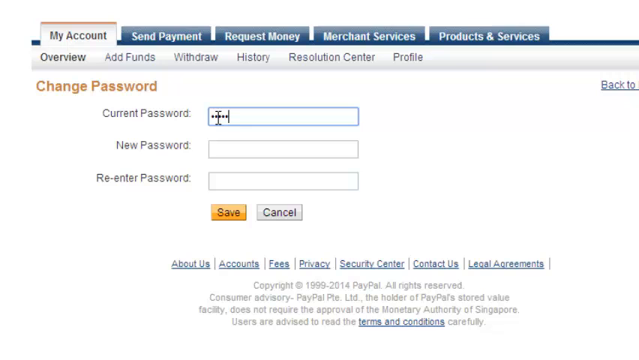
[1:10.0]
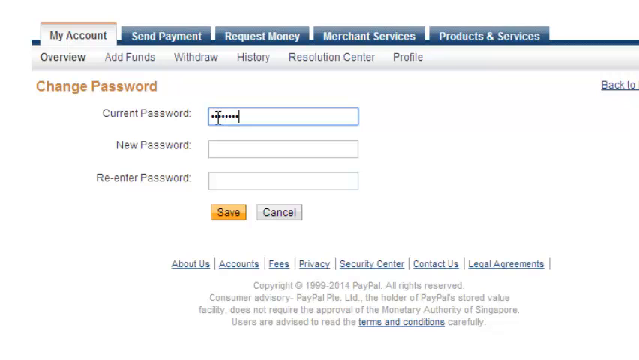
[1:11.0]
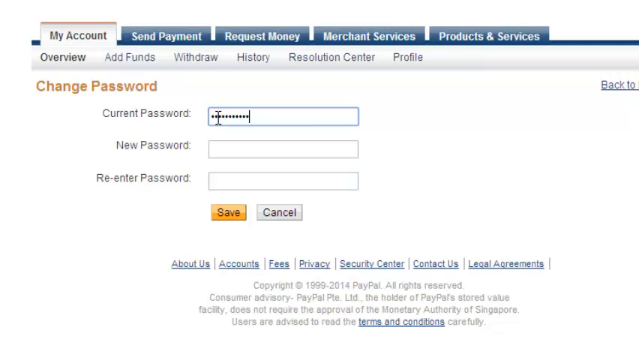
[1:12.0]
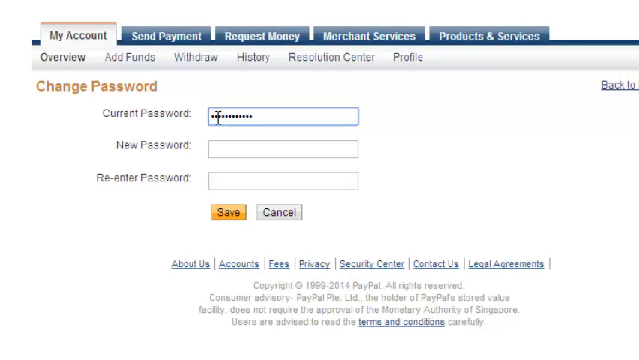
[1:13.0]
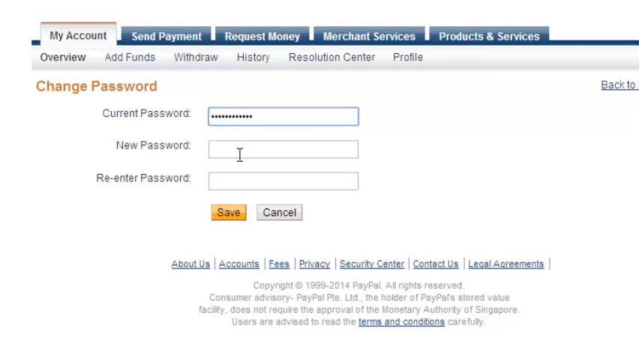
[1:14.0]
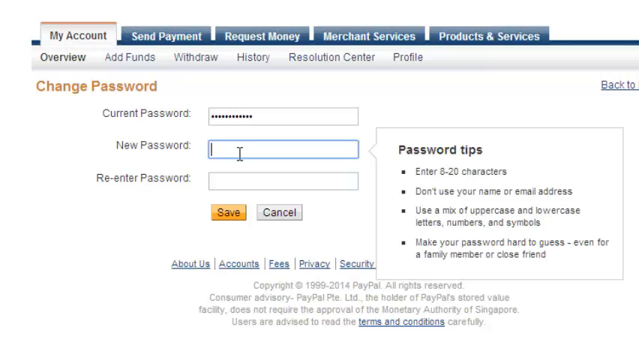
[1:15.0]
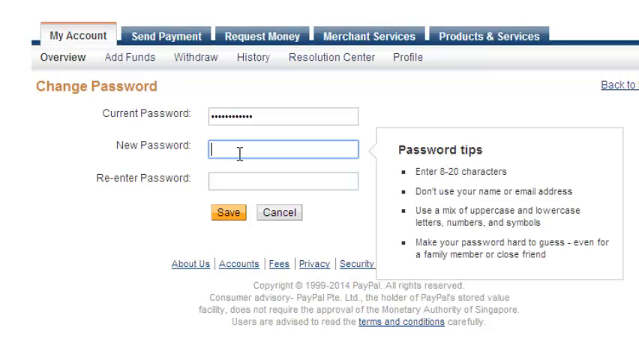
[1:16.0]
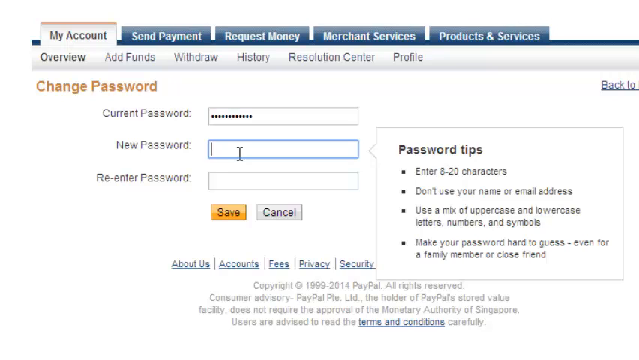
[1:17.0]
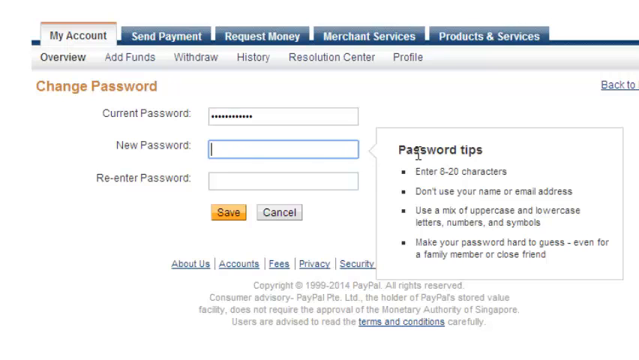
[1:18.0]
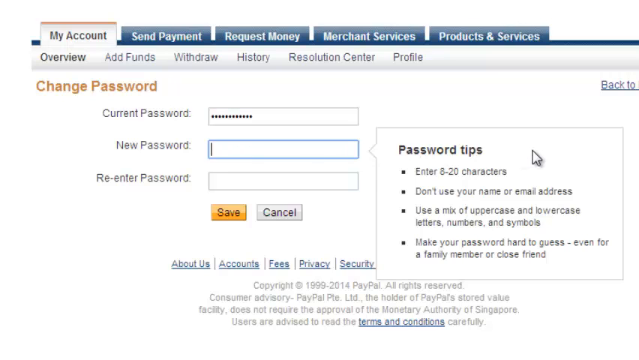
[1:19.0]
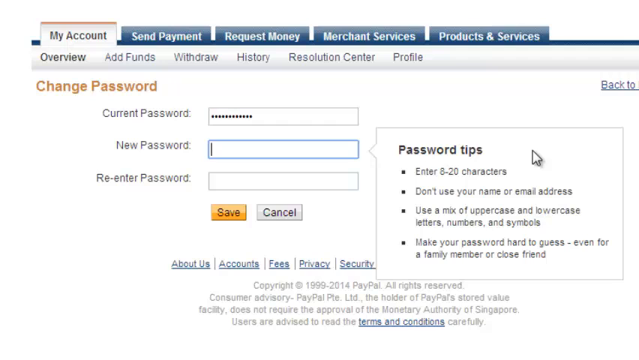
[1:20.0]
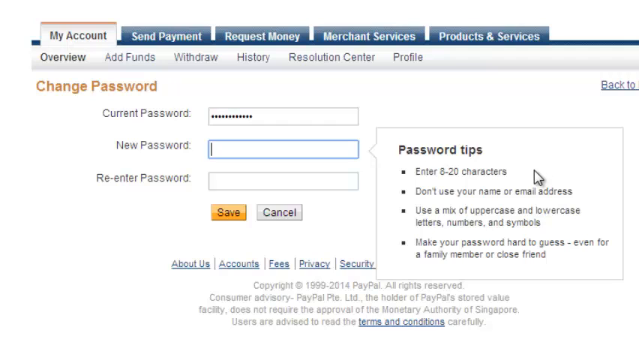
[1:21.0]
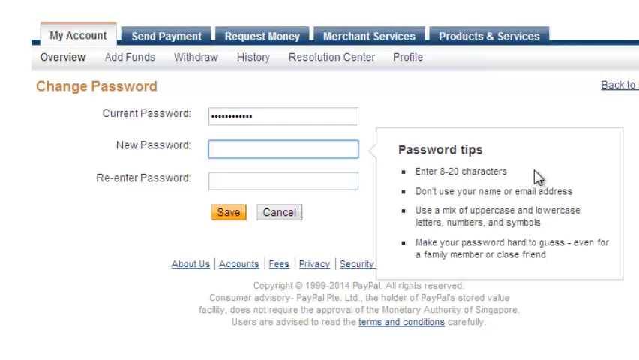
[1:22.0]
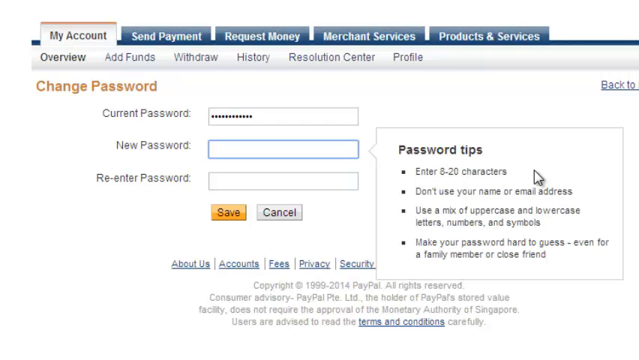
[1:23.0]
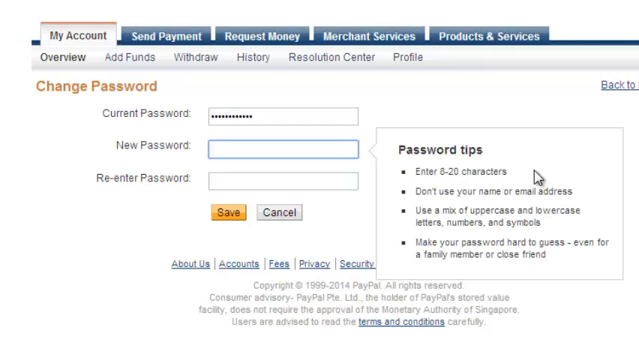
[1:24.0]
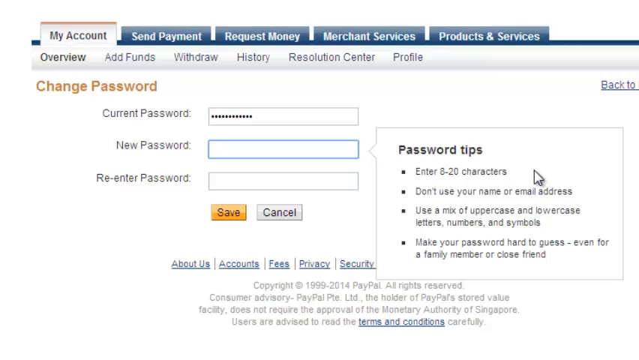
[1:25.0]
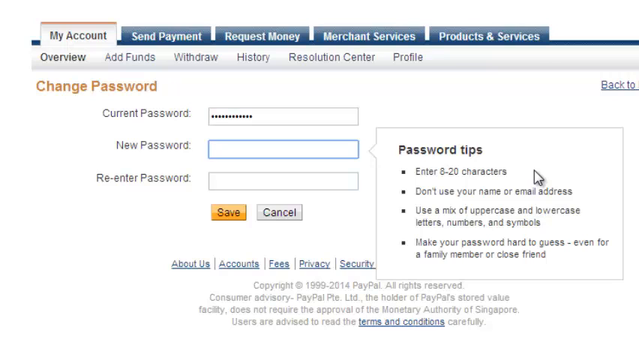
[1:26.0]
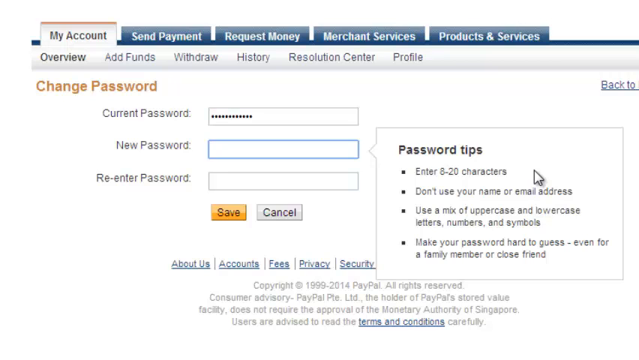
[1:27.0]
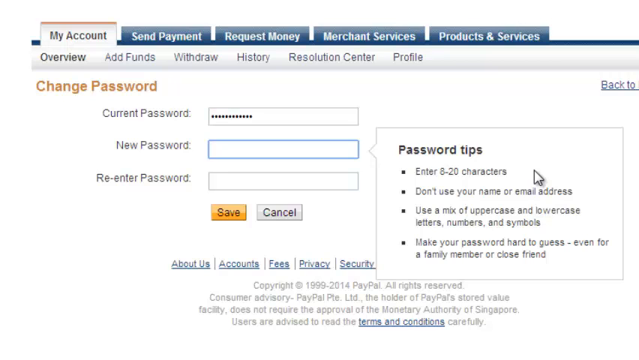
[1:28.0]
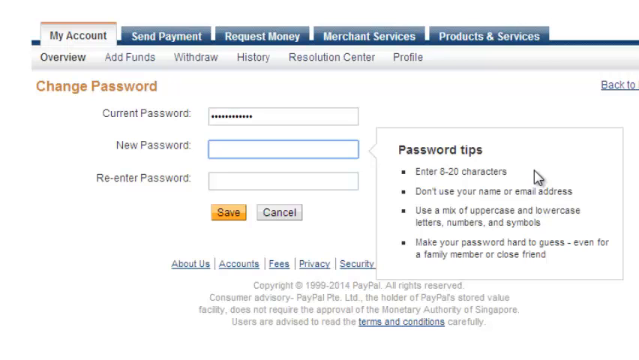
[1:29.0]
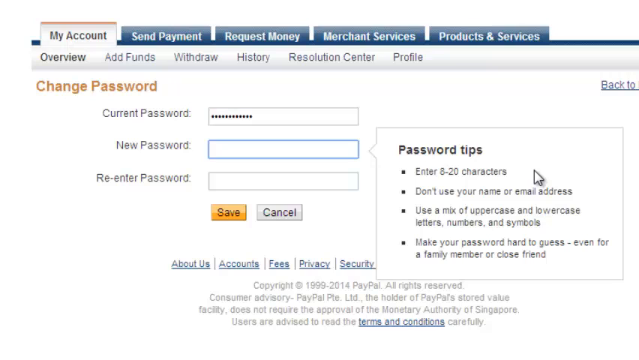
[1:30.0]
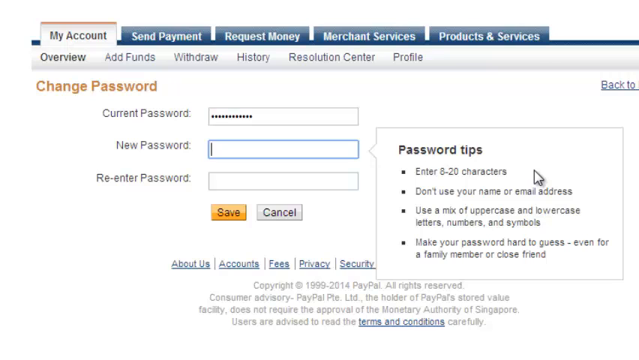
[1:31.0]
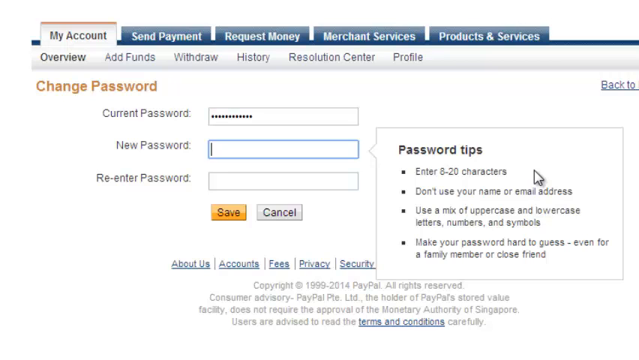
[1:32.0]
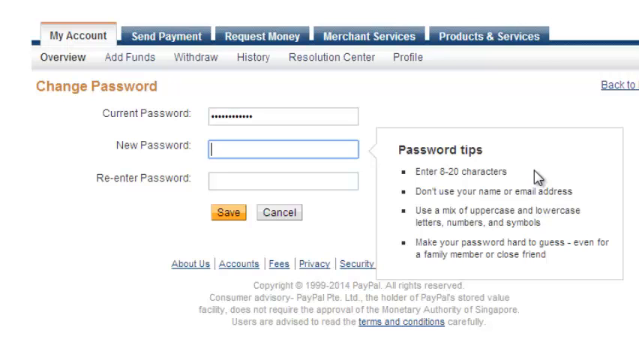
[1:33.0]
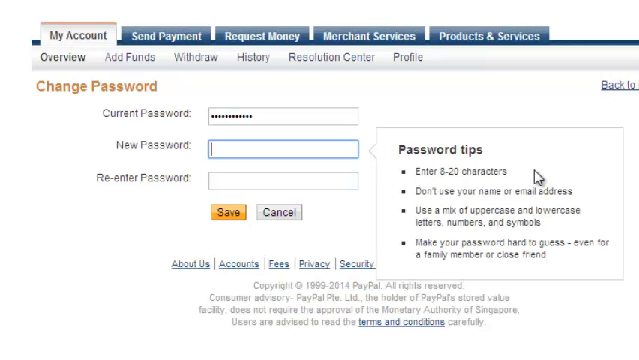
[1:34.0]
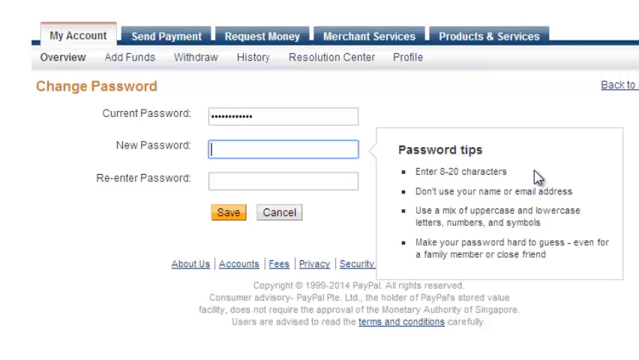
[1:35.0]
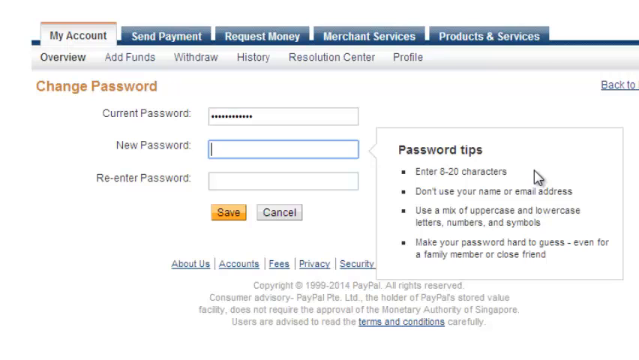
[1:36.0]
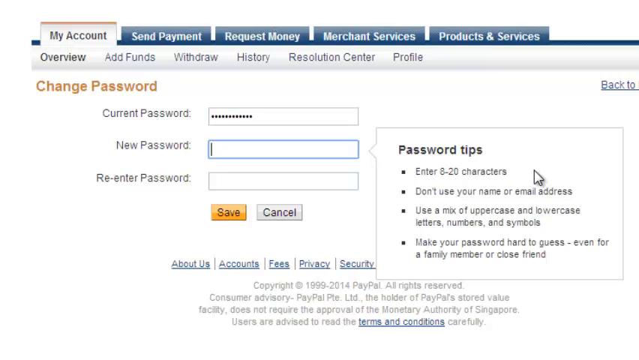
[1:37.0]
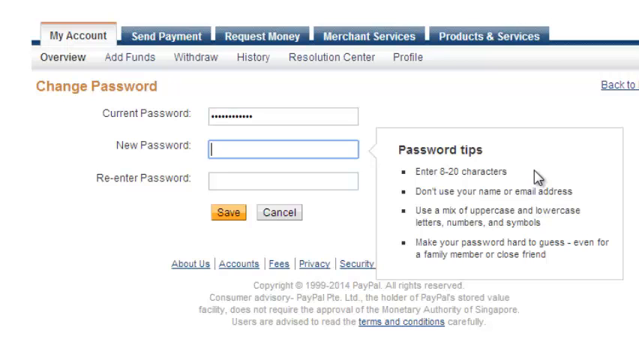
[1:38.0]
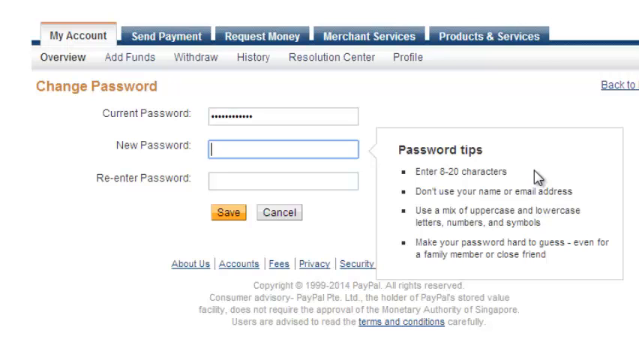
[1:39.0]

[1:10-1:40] A web page has a menu on top where "my account" seems to be selected; it is in gray and the rest of the tabs are in blue. Underneath is brown text that says "change password", and below it kind of bluish black text says "current password" with an input area on the right, where a password has been entered and shows only as dots. Below that, "new password" has an input box, and "re-enter password" also has an input box. Underneath is a yellow save button with a cancel button to its right. The person has clicked on the new password box, and a blinking cursor is there. On the right side it says "password tips" with a bullet point list underneath.